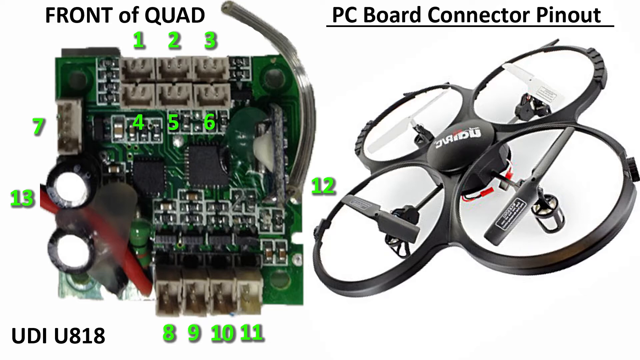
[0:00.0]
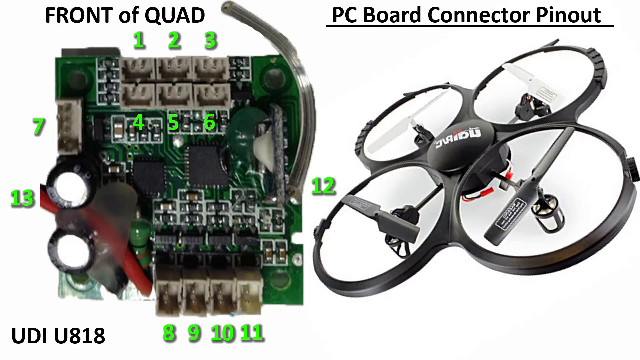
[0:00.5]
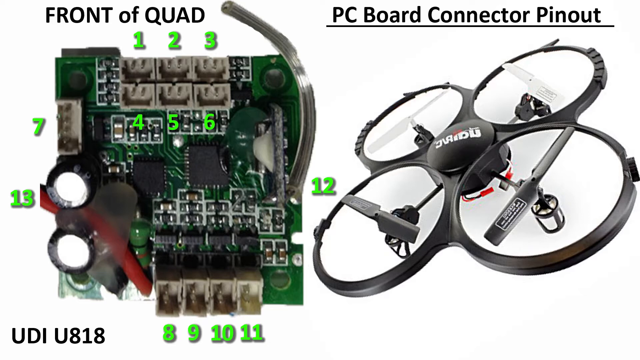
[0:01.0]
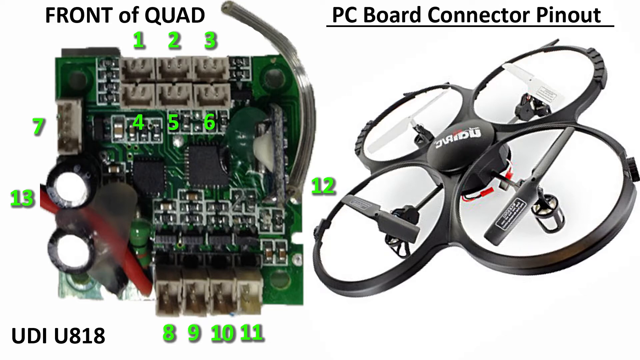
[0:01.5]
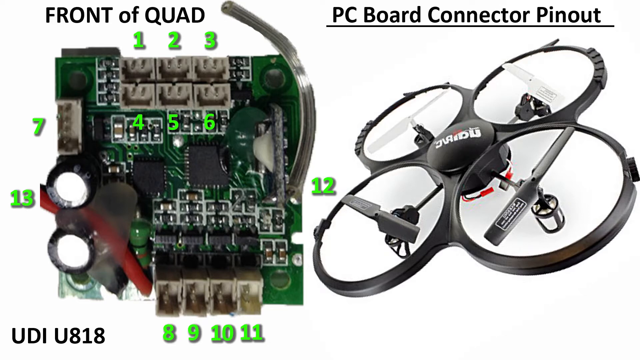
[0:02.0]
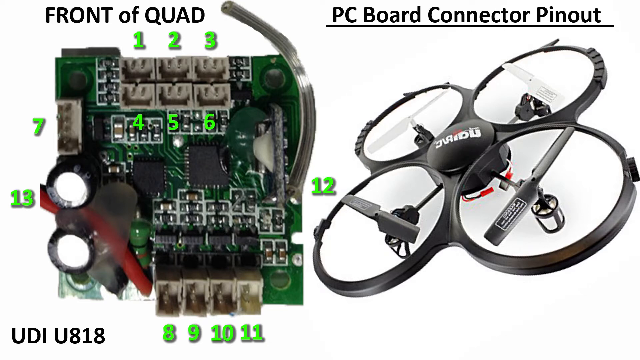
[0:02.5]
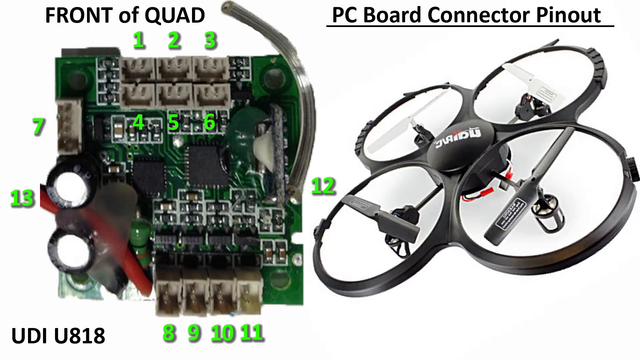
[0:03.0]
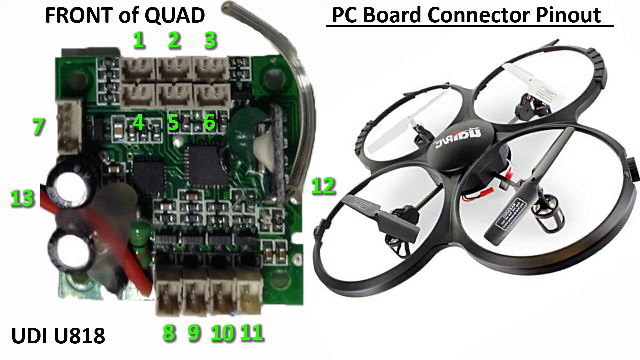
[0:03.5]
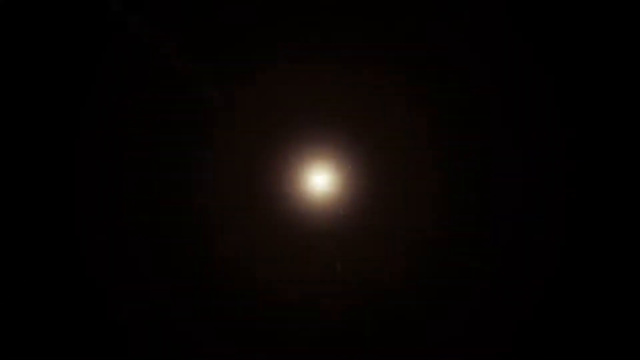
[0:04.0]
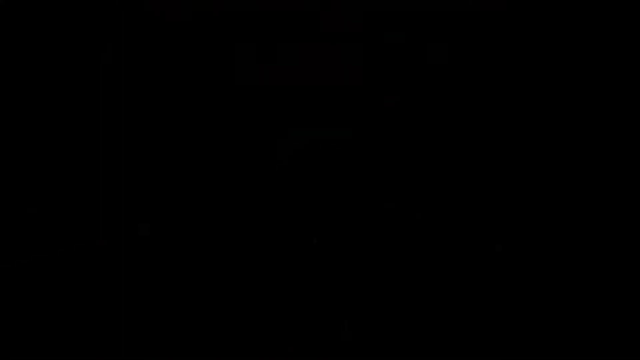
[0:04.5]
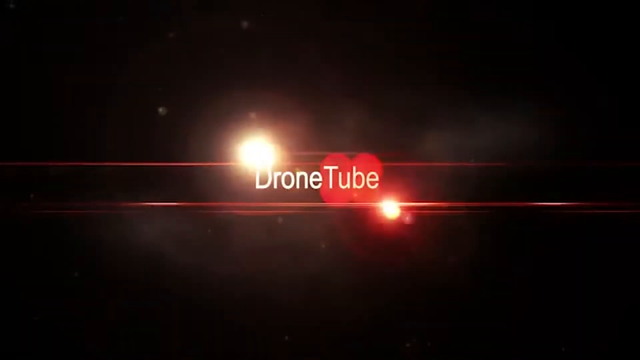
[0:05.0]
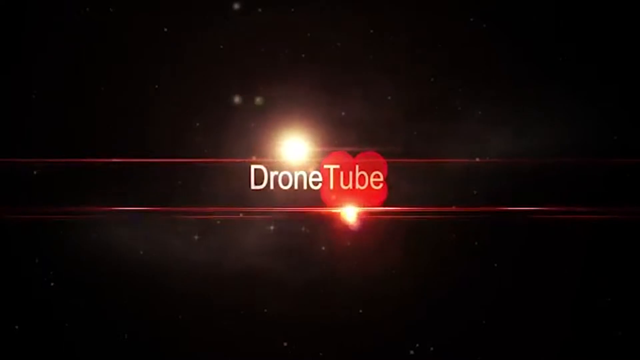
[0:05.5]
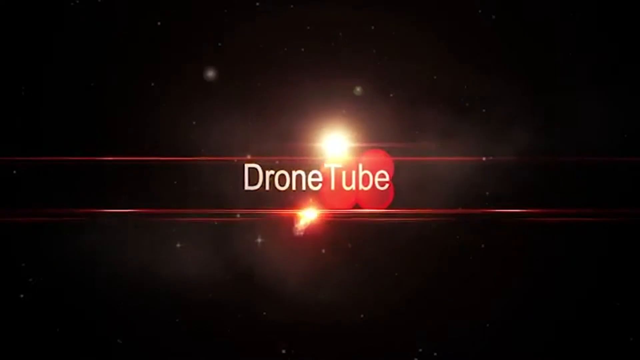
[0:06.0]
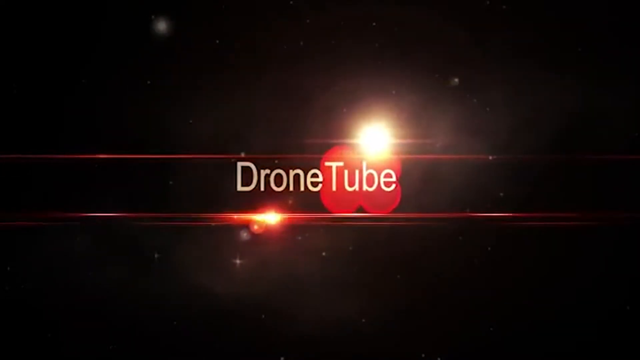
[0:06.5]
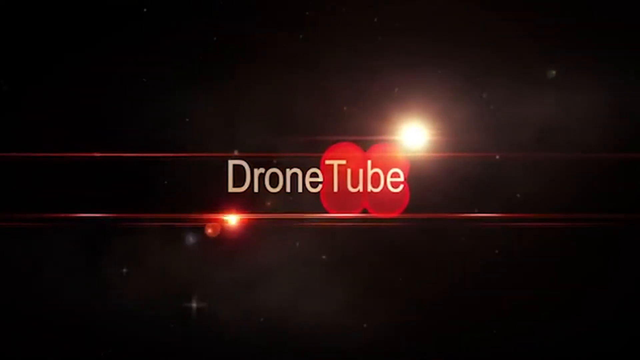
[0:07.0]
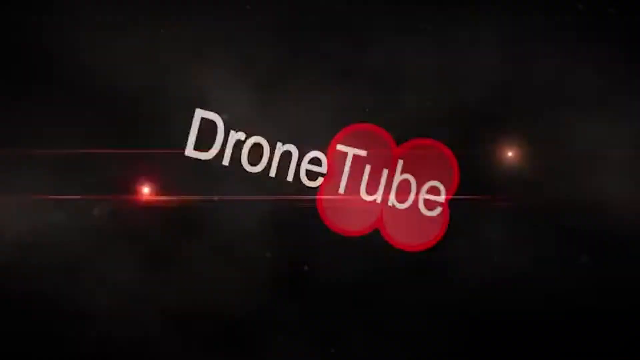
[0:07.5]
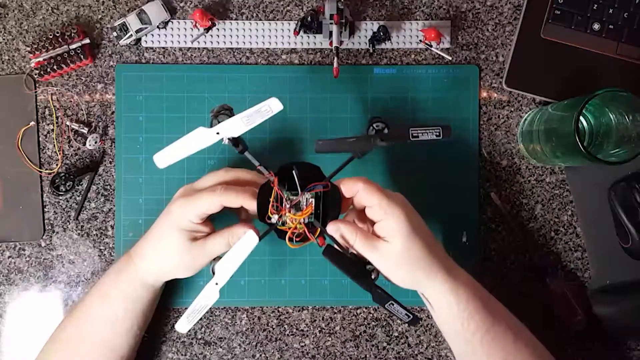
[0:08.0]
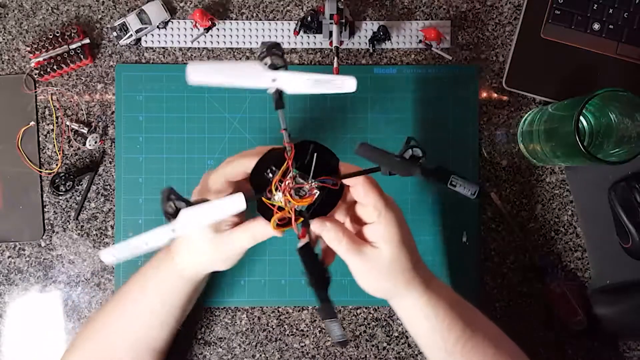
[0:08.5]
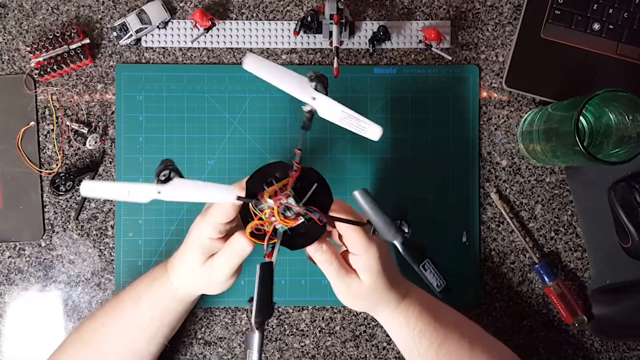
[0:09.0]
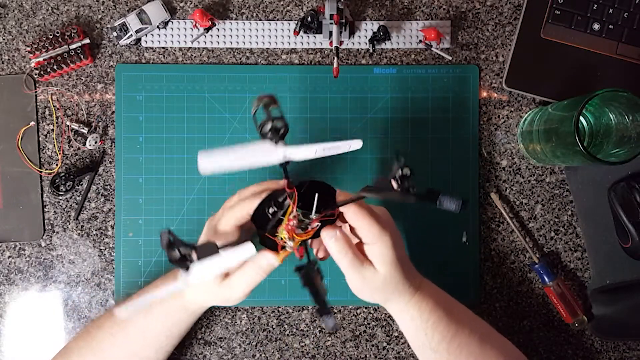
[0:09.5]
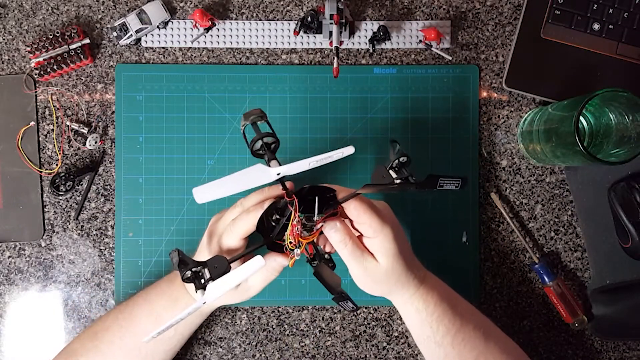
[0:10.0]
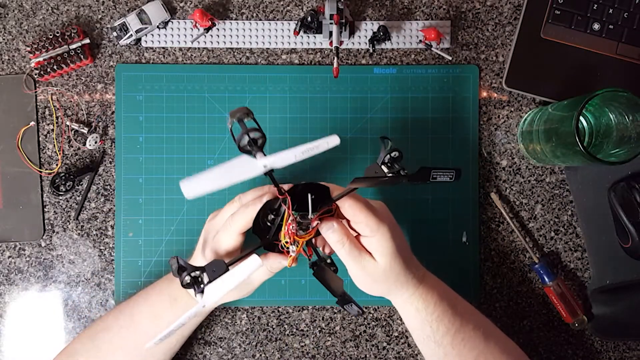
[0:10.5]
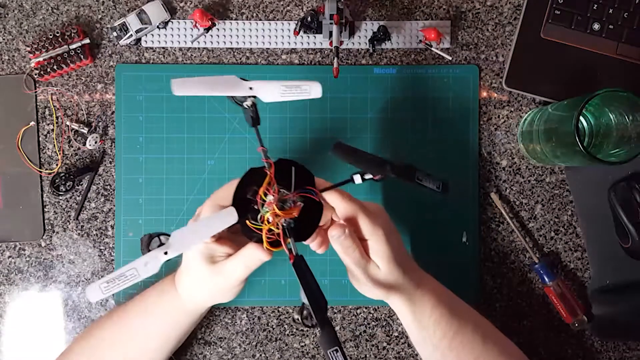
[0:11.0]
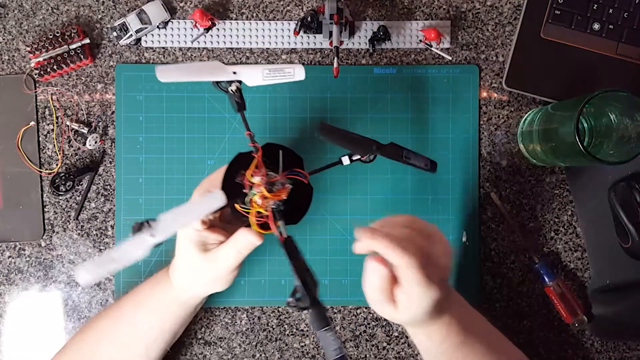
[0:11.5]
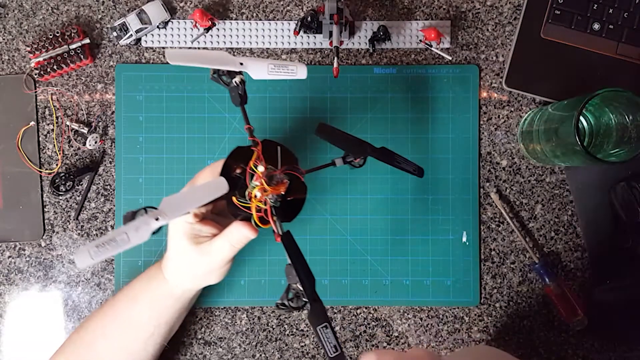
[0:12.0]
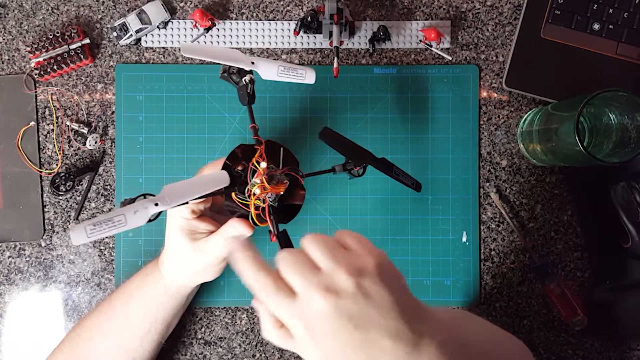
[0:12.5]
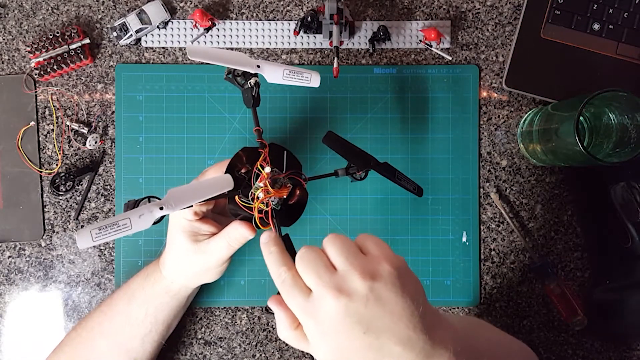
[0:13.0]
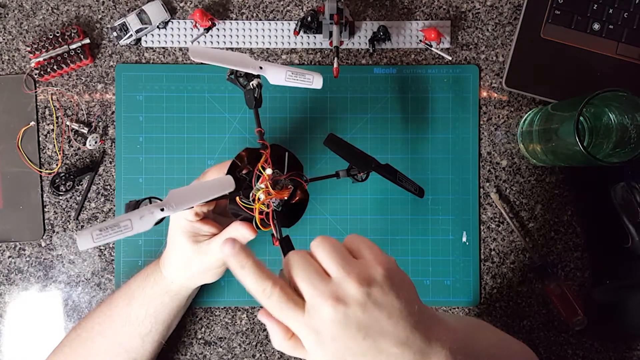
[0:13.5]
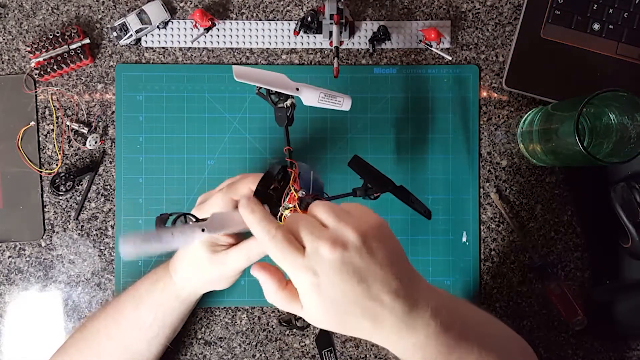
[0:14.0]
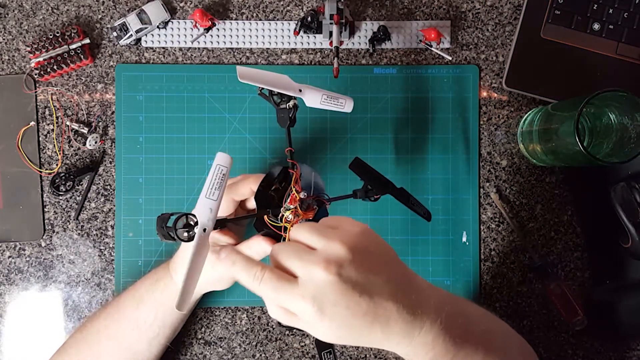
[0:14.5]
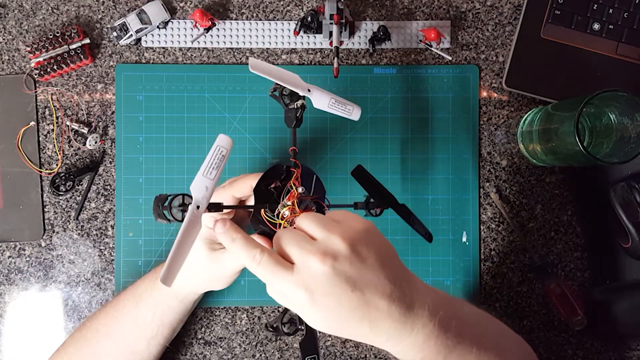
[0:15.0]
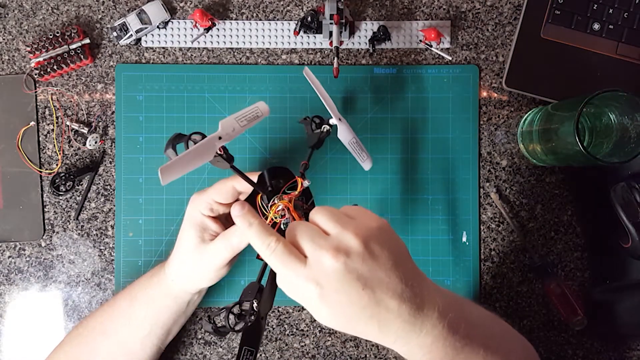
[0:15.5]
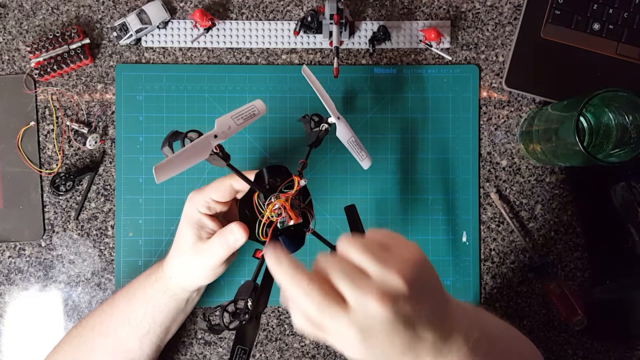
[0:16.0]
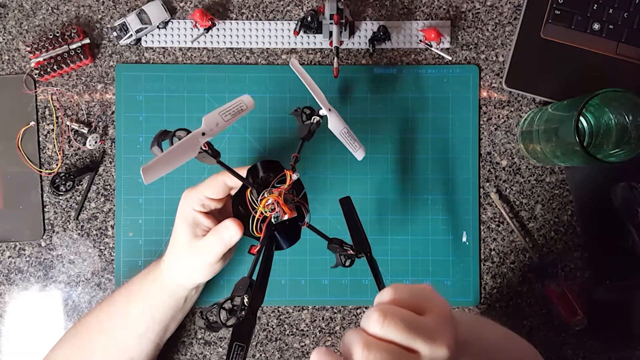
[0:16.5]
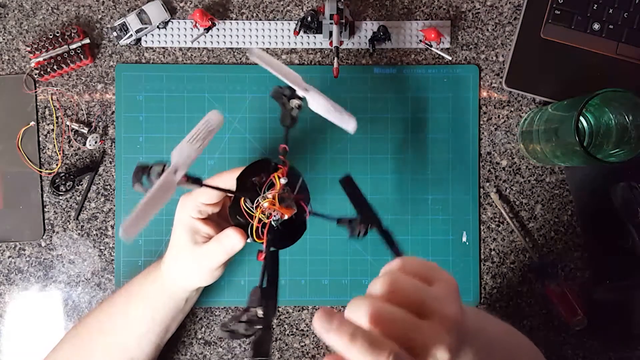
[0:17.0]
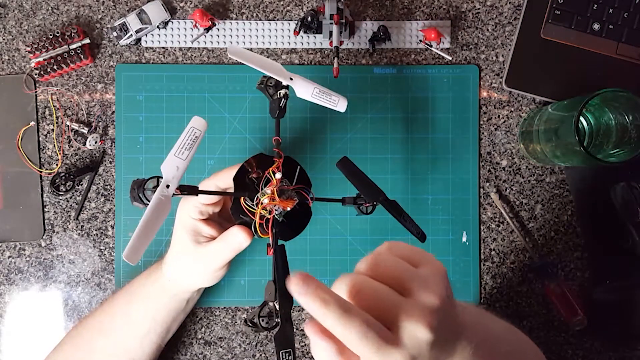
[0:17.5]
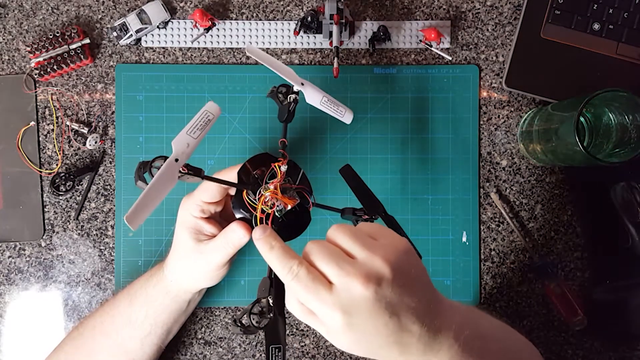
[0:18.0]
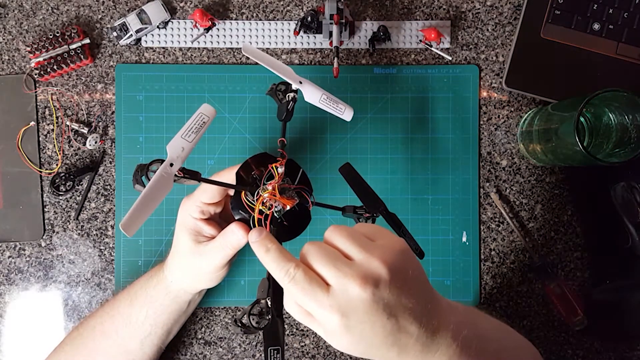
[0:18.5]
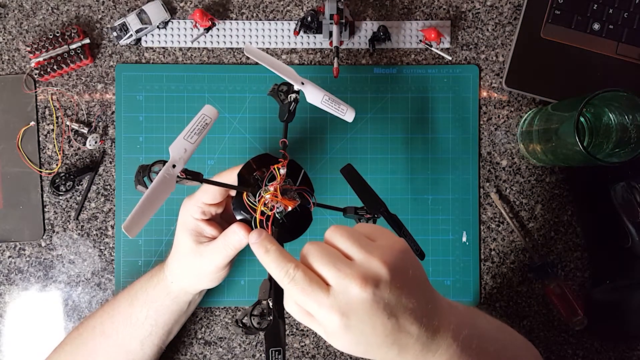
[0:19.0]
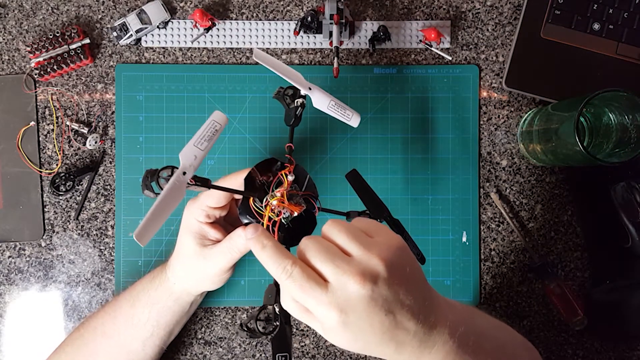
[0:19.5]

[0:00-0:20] The video begins with a picture of the front of a quad PC board connector pinout, then moves to a wallpaper that says "DroneTube". A person's hands are visible: one subject holds a drone, with lots of other equipment around him, including a PC. Not much happens; he holds the drone and points at a particular spot on it, possibly a faulty part. The video appears to be about drone repair or drone manufacturing.